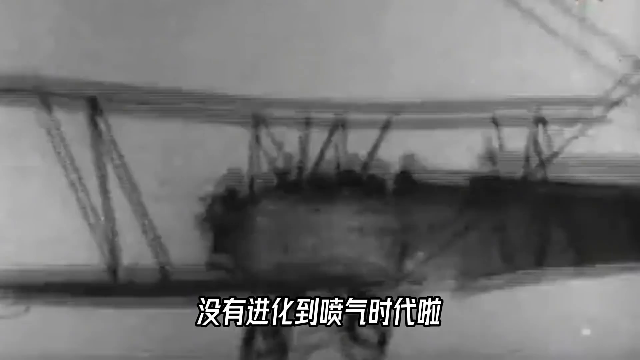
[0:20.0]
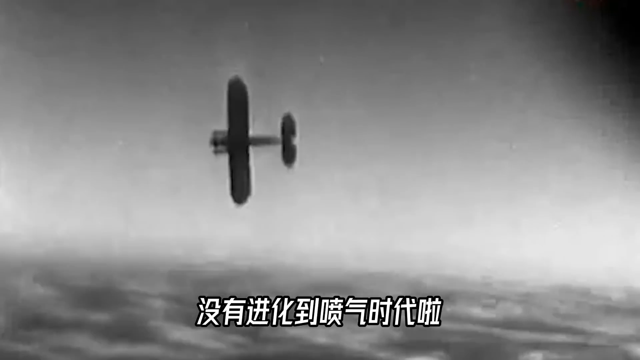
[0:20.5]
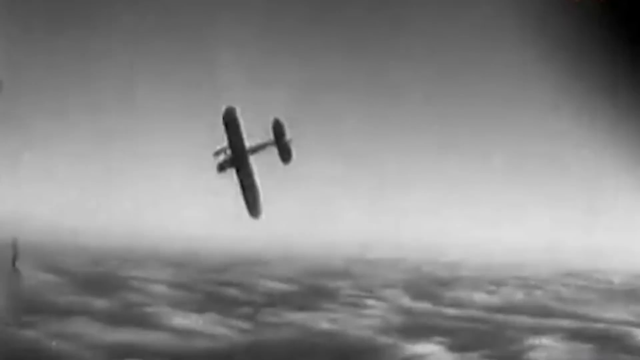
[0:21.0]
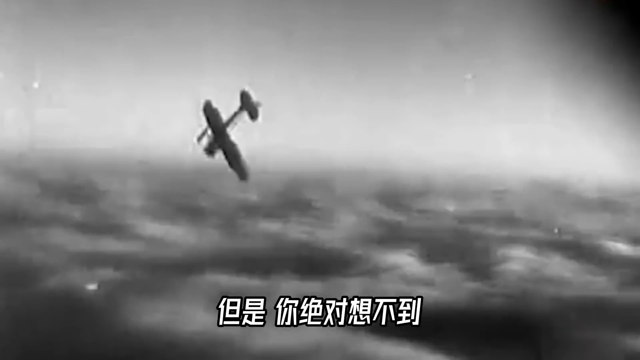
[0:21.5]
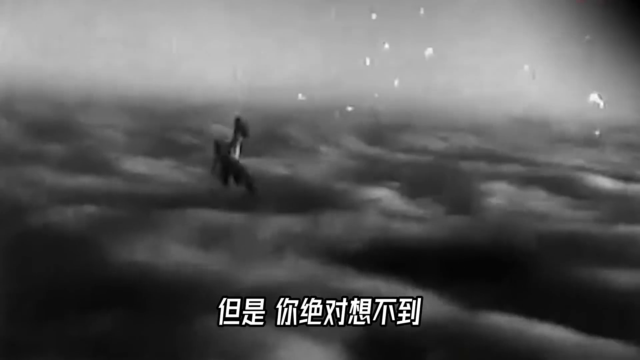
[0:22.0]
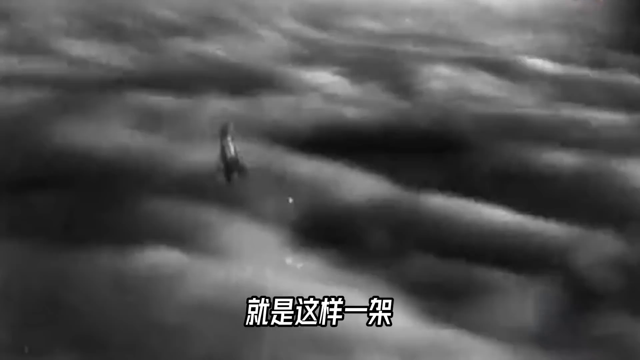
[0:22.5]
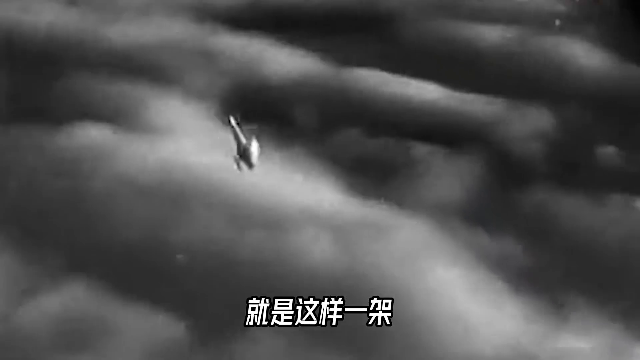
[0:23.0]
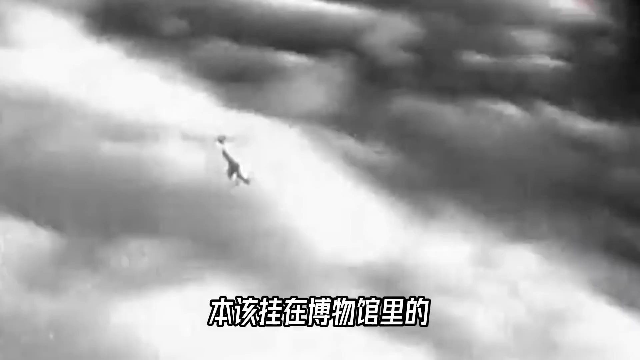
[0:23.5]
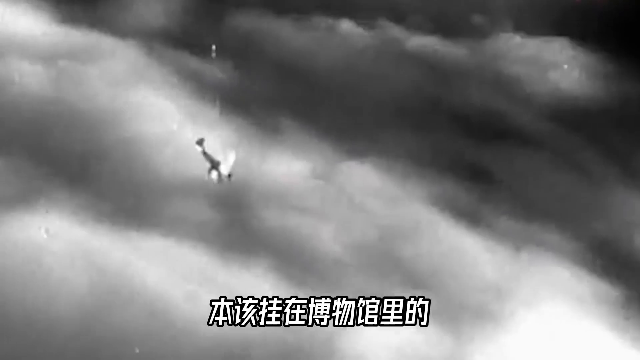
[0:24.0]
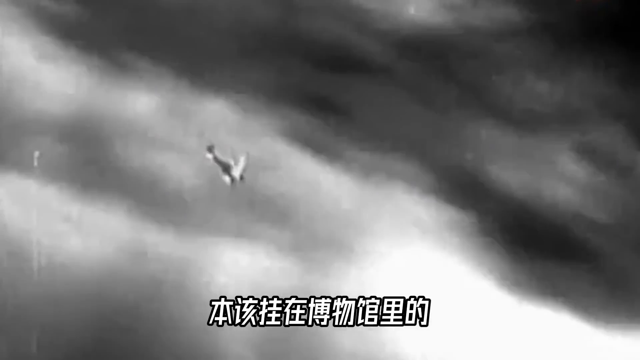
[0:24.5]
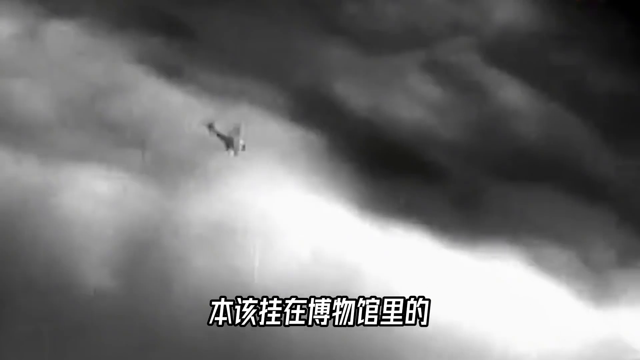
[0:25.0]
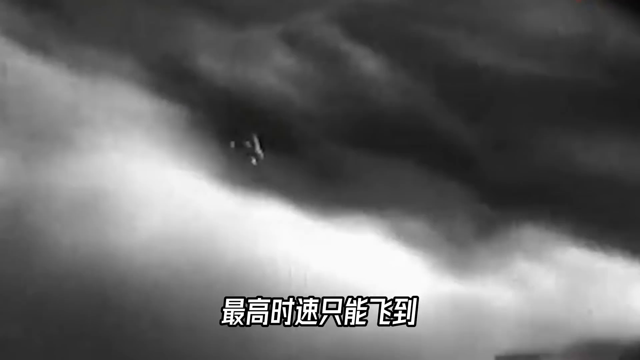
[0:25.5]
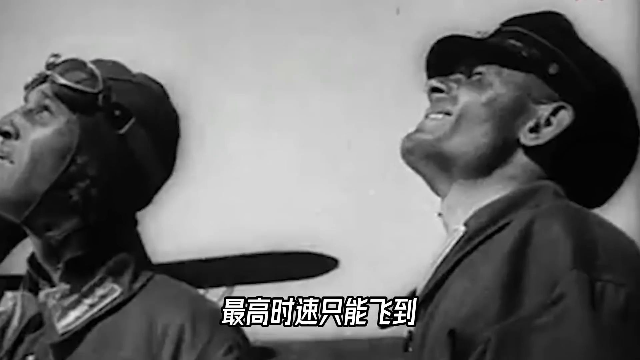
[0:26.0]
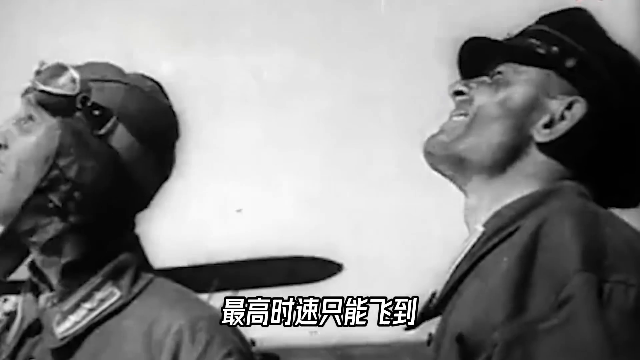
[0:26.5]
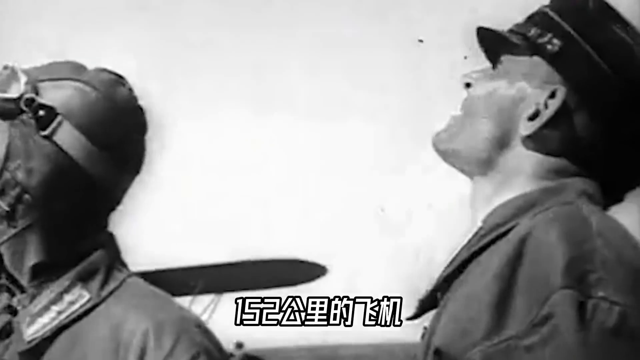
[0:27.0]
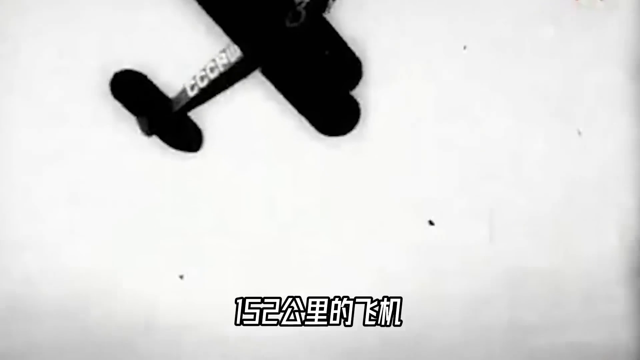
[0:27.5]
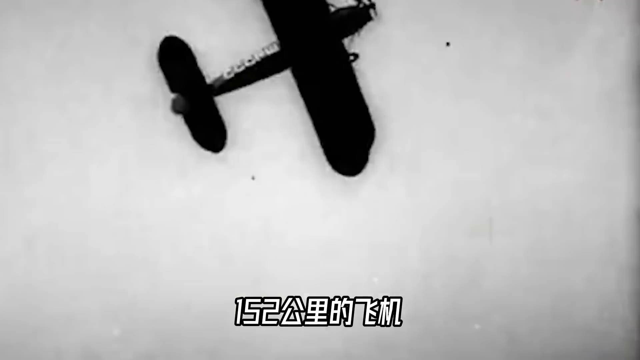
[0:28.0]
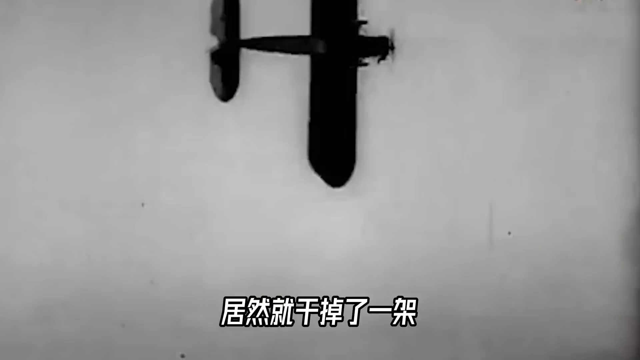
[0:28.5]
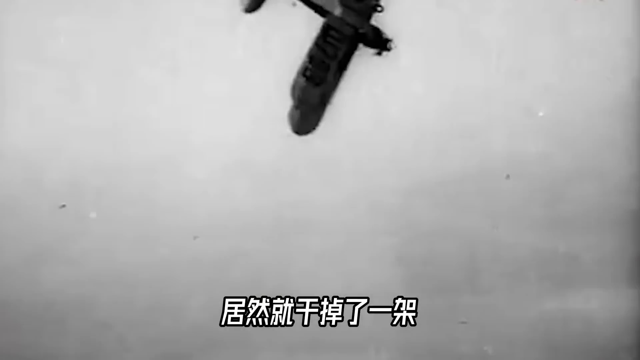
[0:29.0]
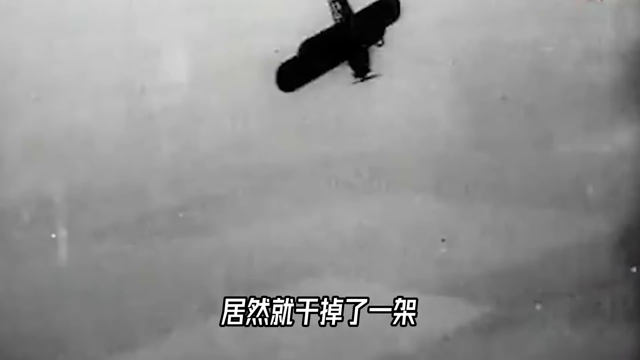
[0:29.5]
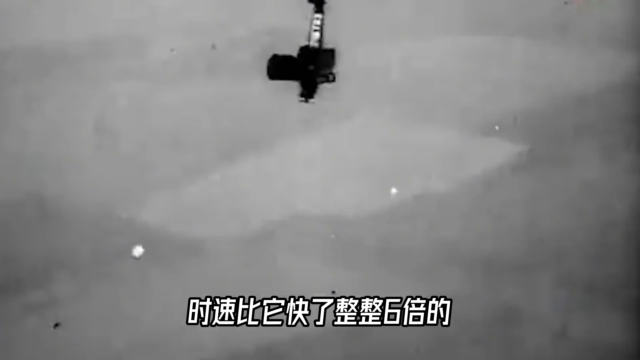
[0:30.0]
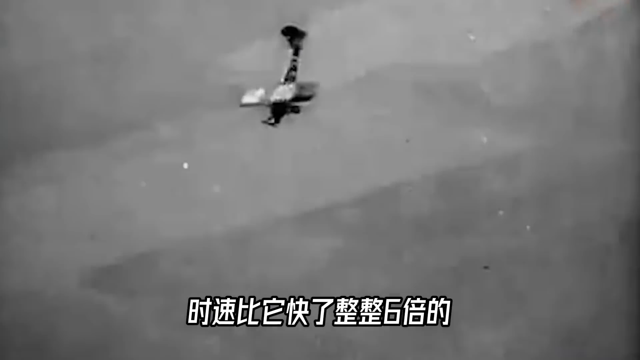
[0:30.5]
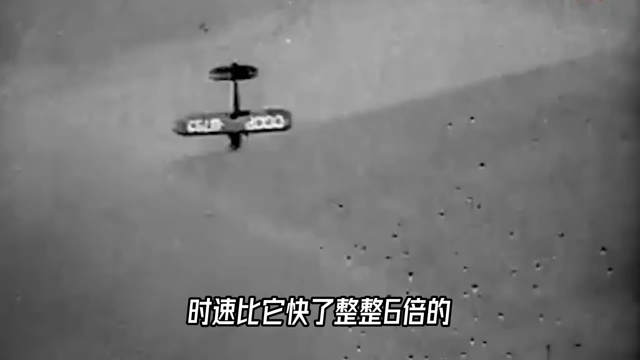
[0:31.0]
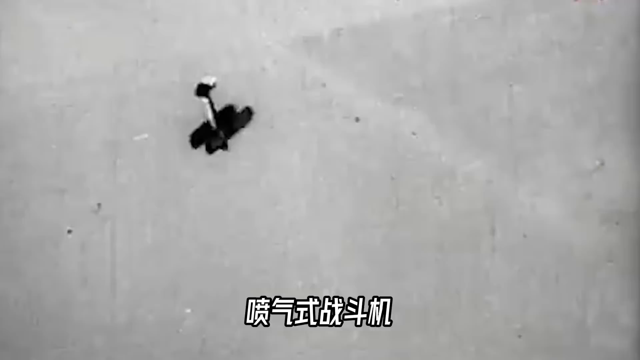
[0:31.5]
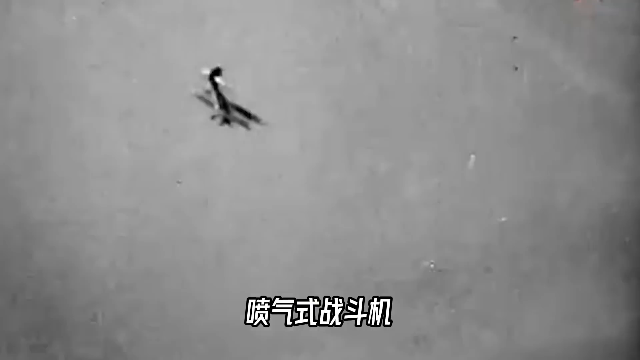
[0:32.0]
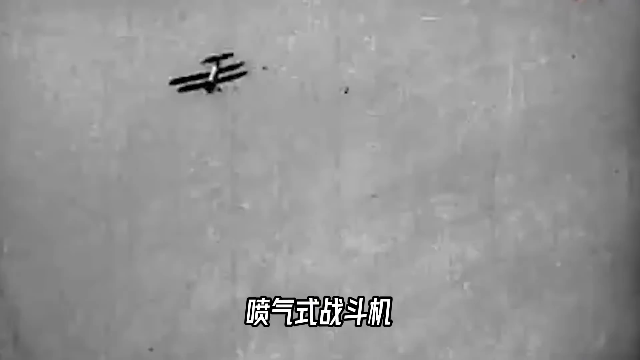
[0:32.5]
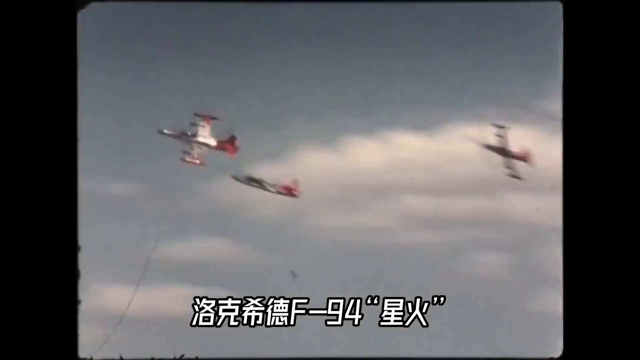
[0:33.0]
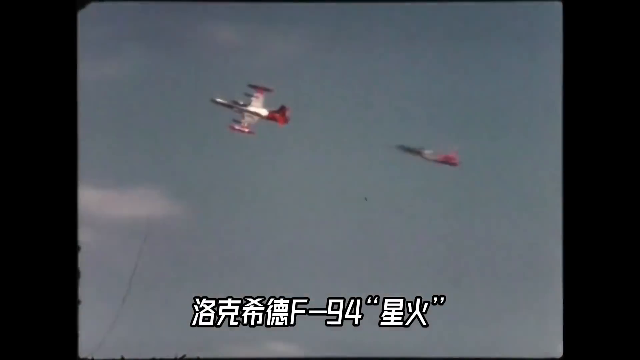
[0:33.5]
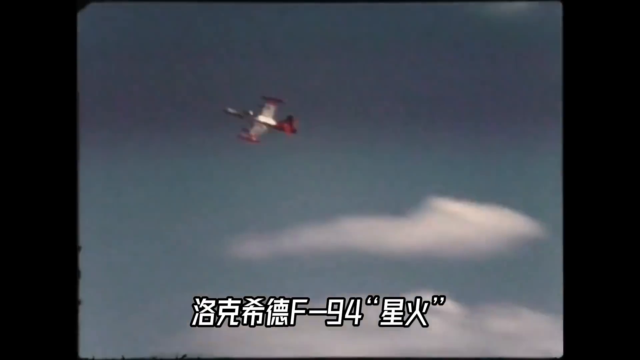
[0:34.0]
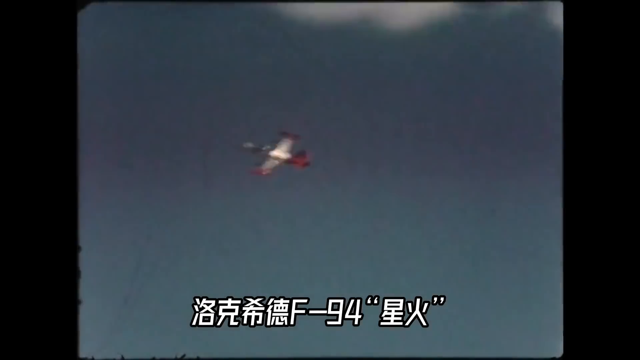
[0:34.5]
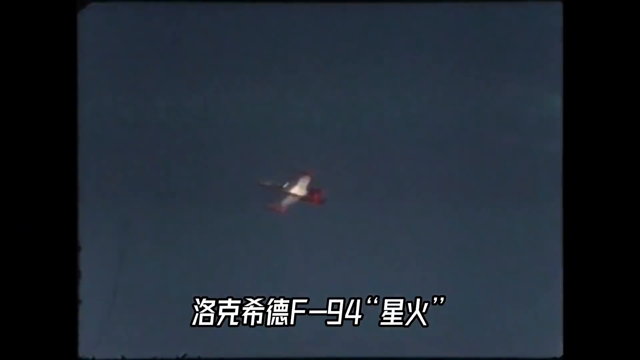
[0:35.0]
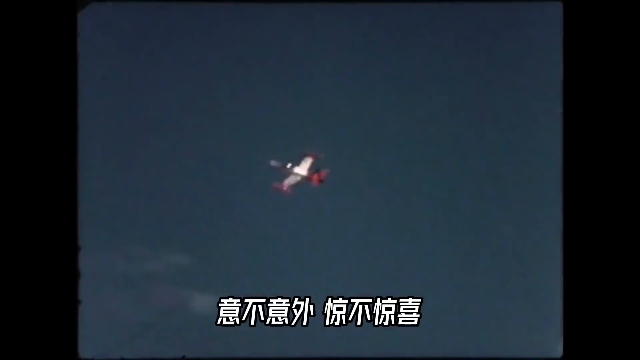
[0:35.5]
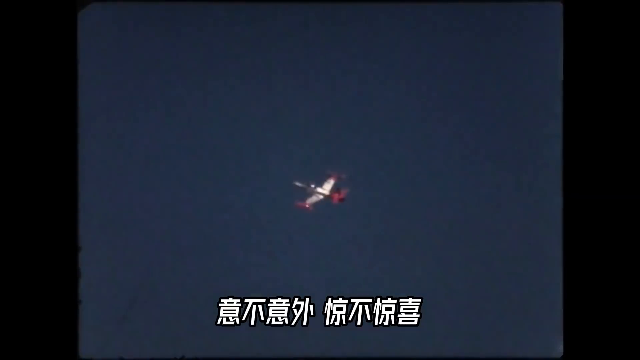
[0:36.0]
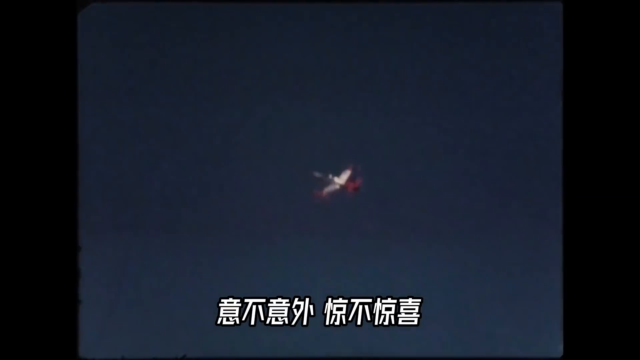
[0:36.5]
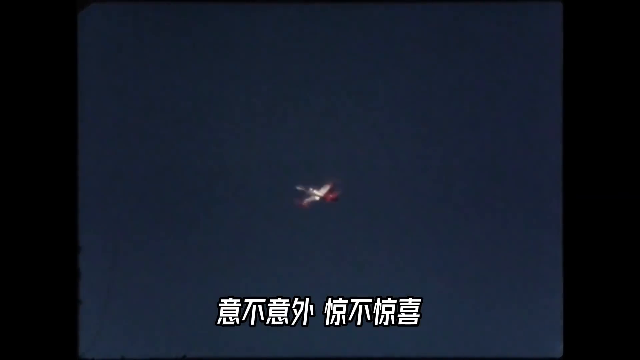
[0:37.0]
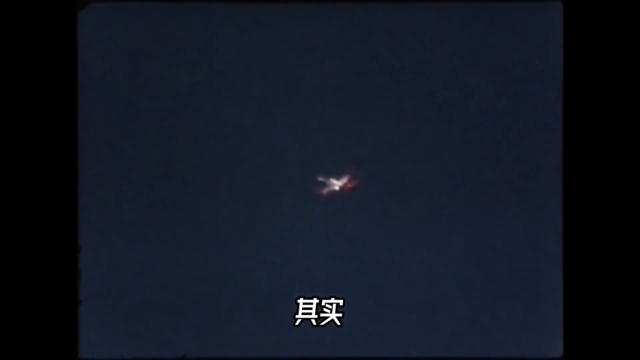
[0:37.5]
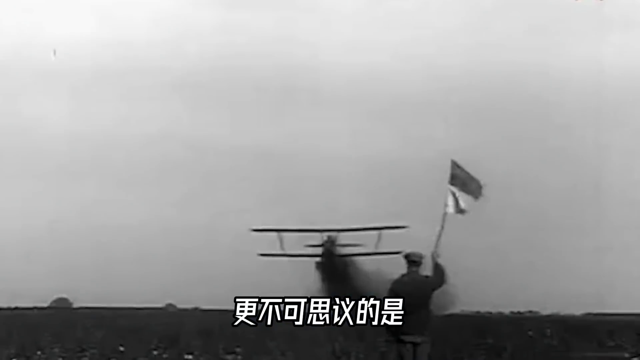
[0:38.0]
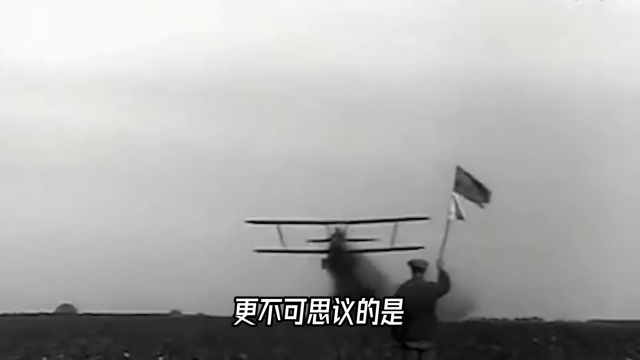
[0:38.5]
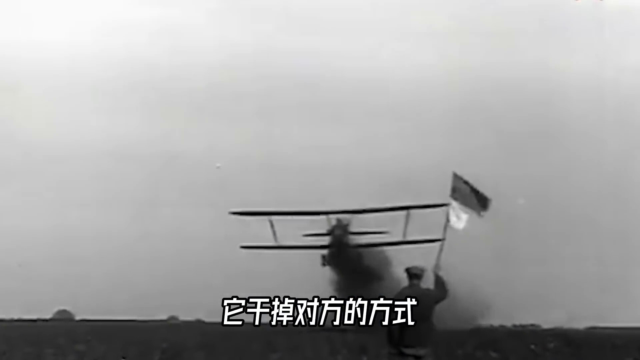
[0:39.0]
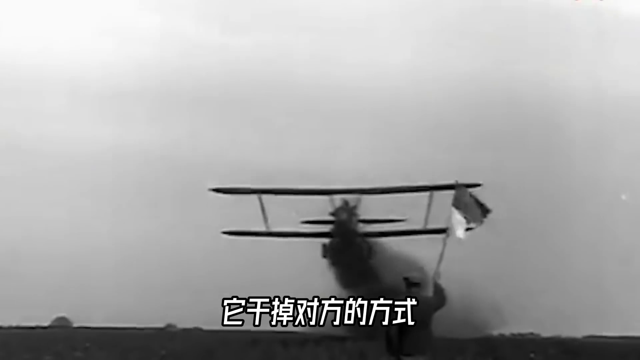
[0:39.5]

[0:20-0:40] Black-and-white scenes continue to show an old fighter plane with a propeller in the front. The plane flies and executes a circular dive in the sky, with clouds surrounding it. A different view shows the plane hurtling quickly through the sky as clouds pass around it, with text in Japanese across the bottom of the screen. The scene switches briefly to men looking up at the sky, then to a black-and-white close-up of a similar plane with "CCCP" written on its side, indicating a Soviet plane, while text in either Japanese or Chinese runs across the bottom of the screen. The plane does a circular nosedive down toward the ground. The video then switches to color footage of three more modern fighter jets flying in configuration, followed by one jet with red tips on the wings and a red tail flying by itself. The text remains across the bottom of the screen.